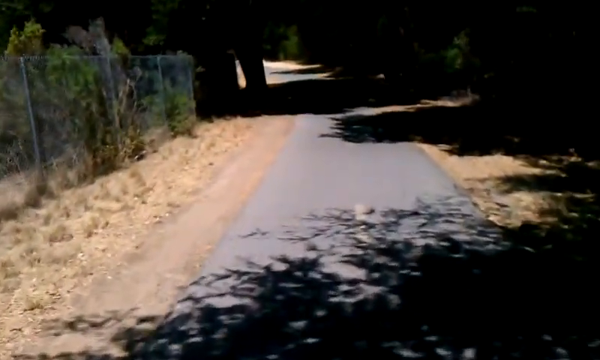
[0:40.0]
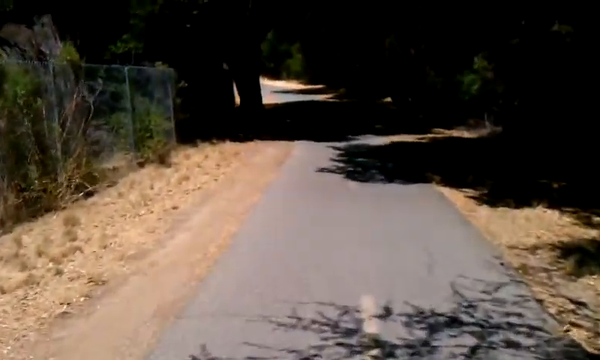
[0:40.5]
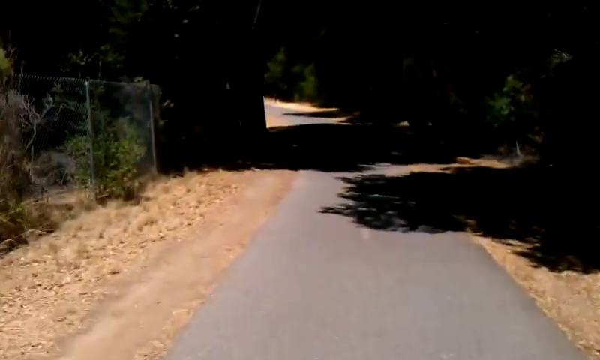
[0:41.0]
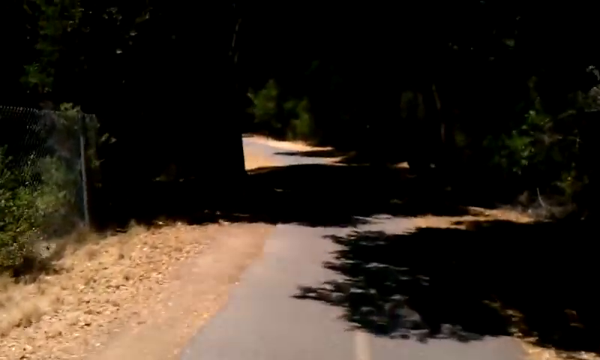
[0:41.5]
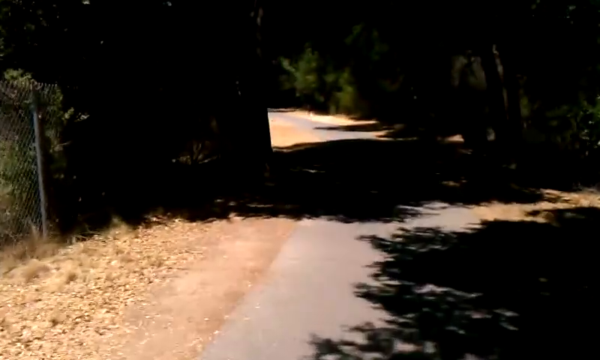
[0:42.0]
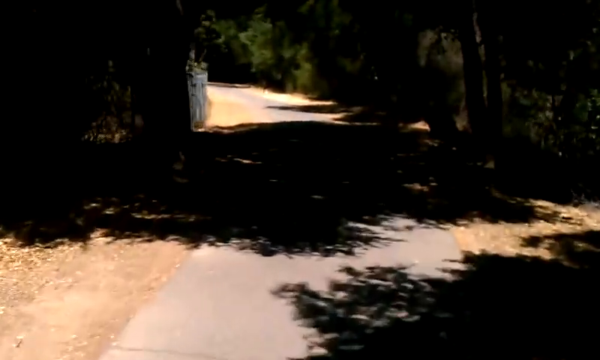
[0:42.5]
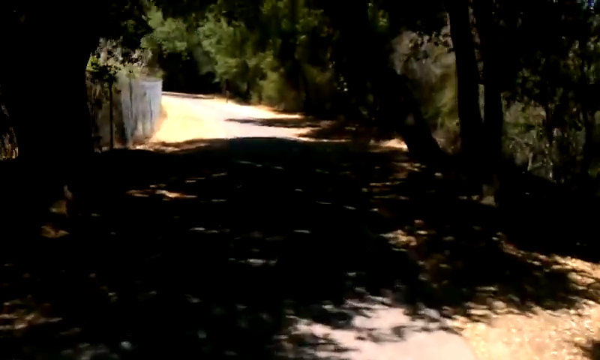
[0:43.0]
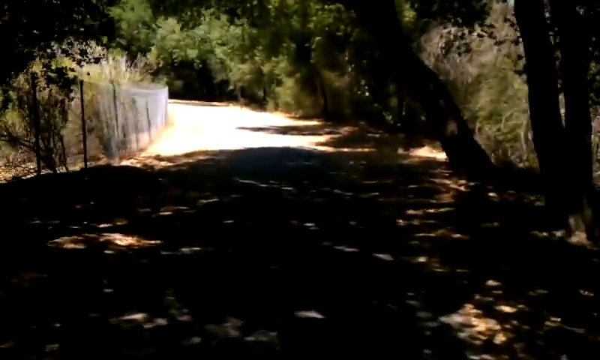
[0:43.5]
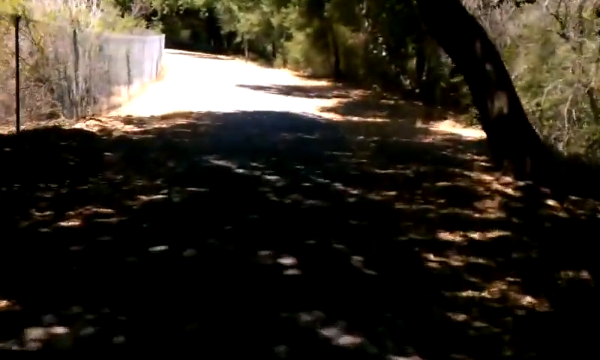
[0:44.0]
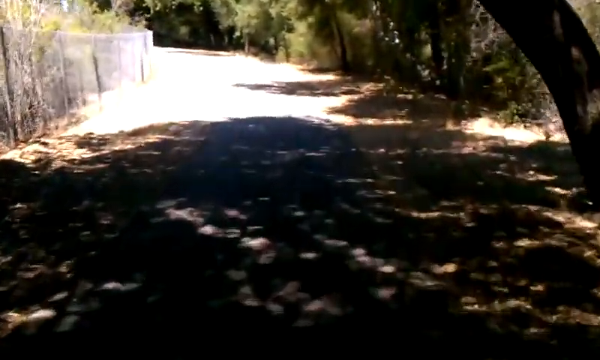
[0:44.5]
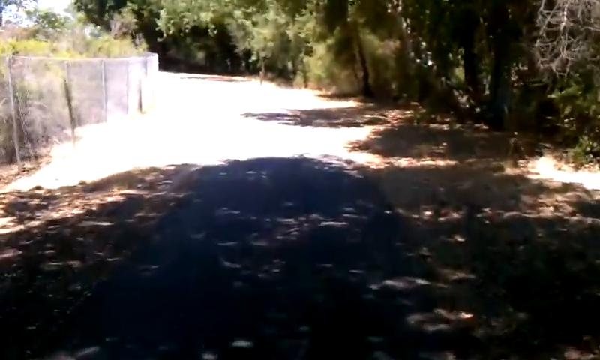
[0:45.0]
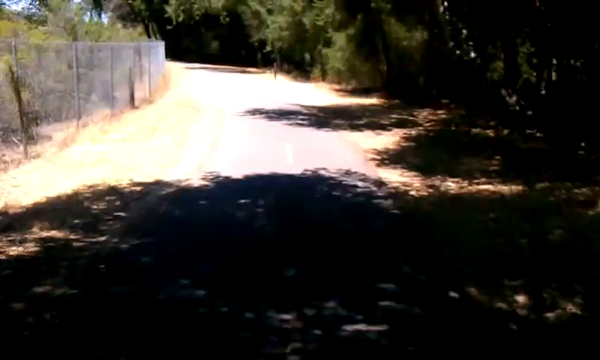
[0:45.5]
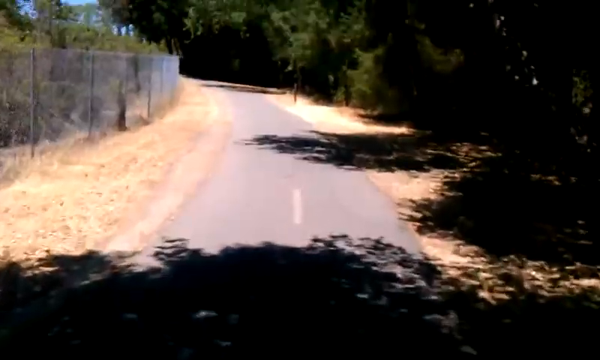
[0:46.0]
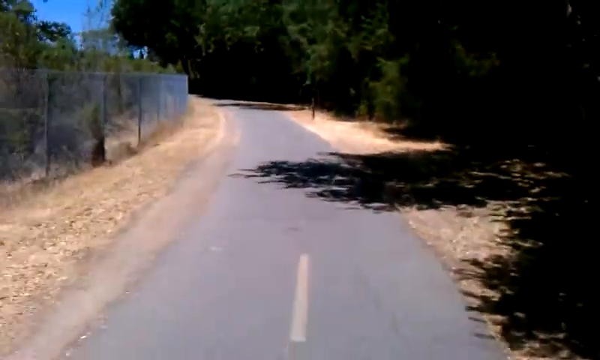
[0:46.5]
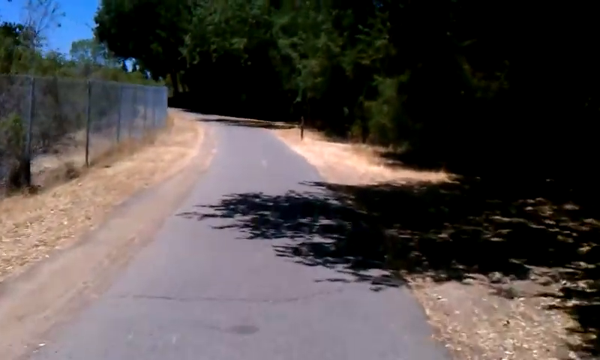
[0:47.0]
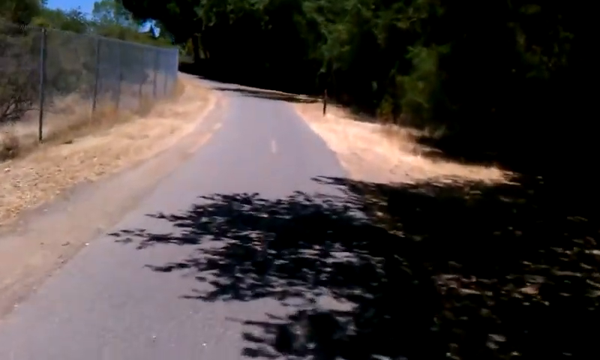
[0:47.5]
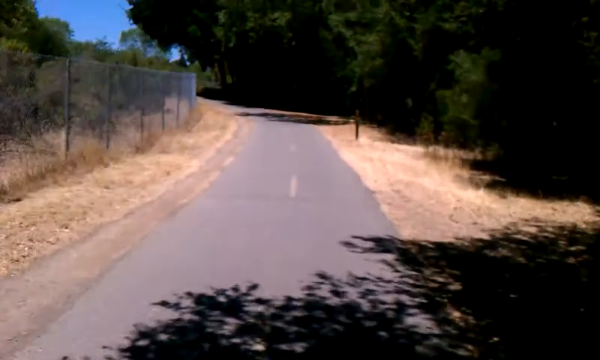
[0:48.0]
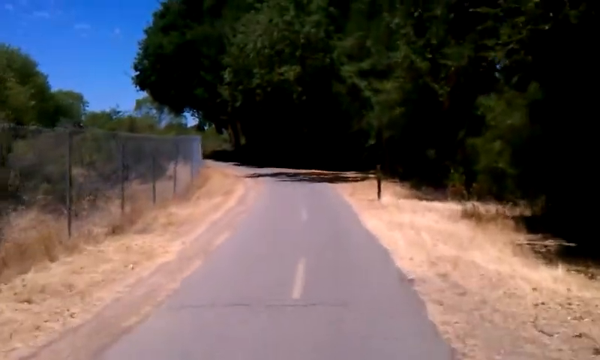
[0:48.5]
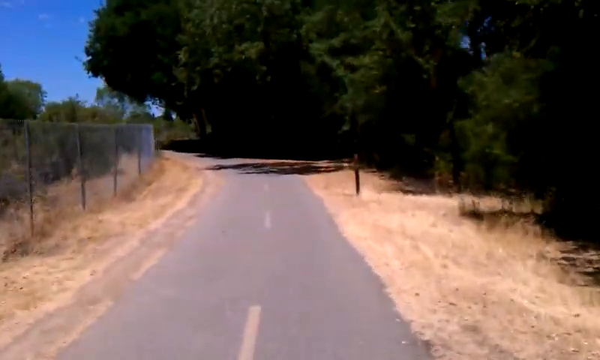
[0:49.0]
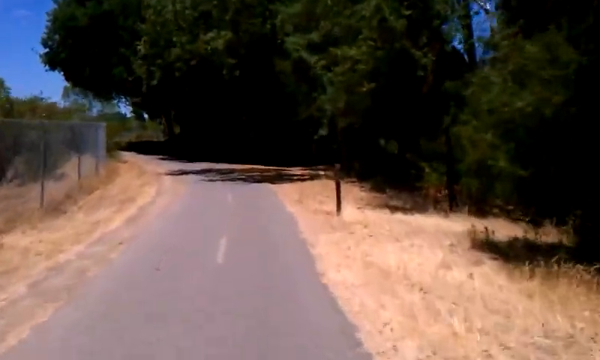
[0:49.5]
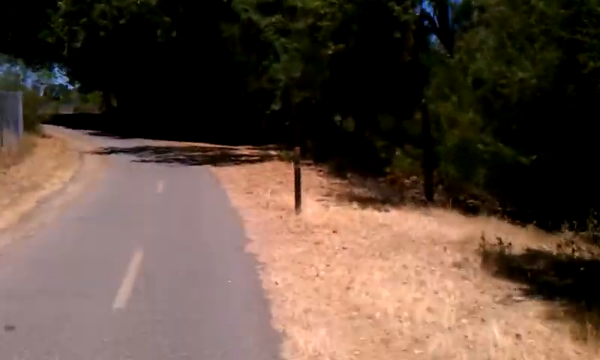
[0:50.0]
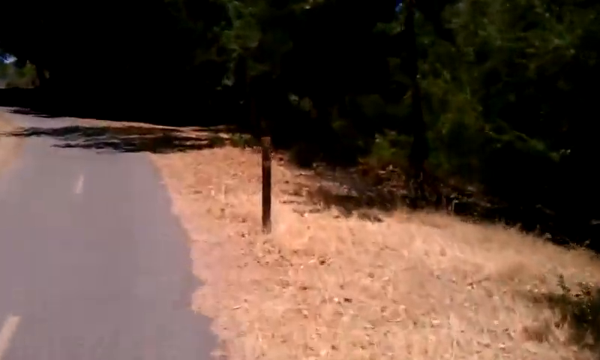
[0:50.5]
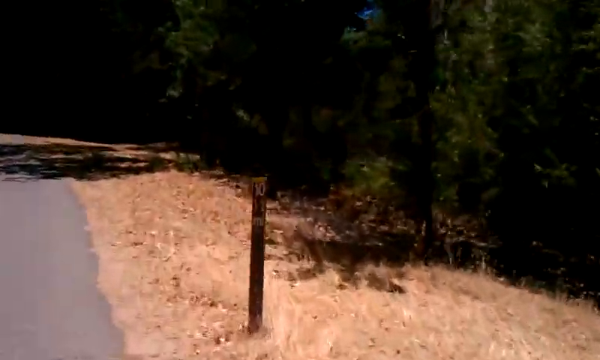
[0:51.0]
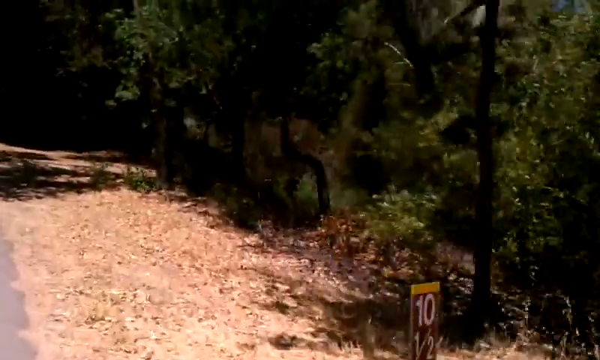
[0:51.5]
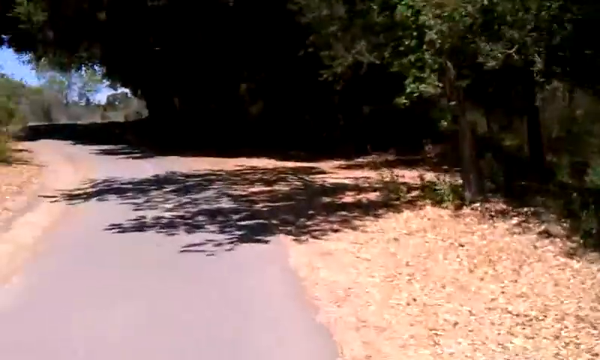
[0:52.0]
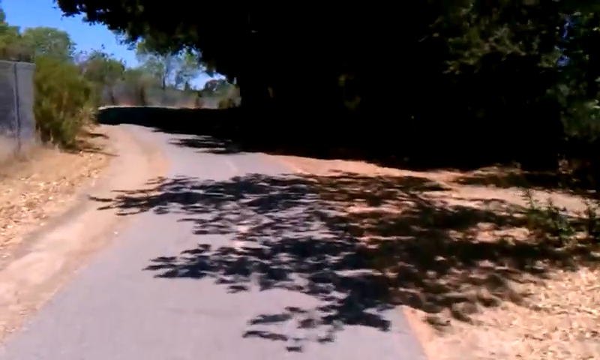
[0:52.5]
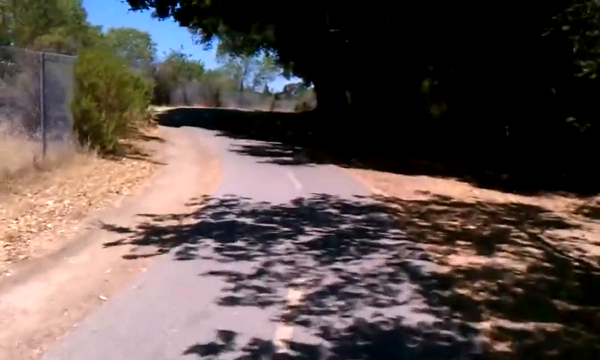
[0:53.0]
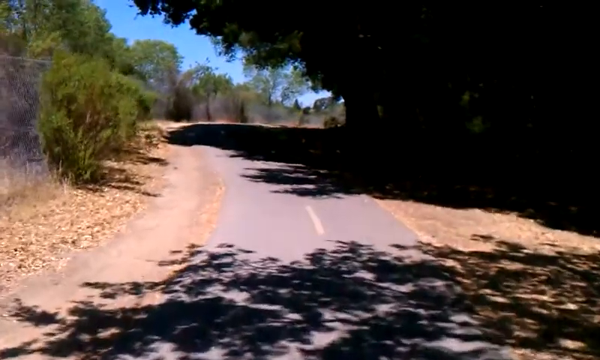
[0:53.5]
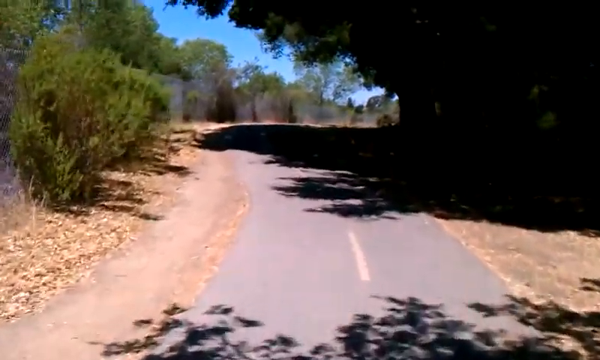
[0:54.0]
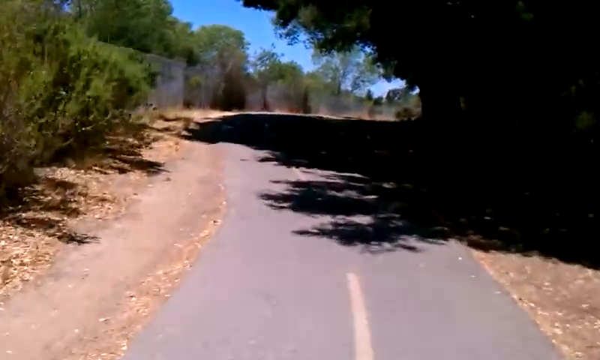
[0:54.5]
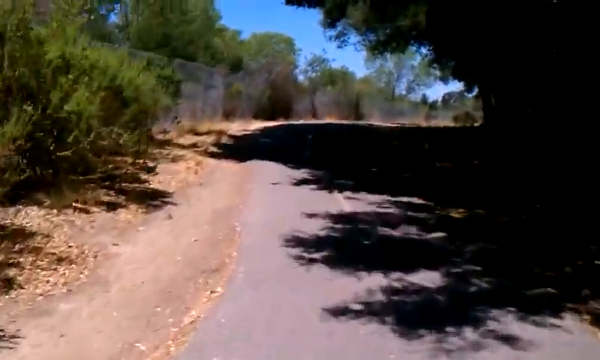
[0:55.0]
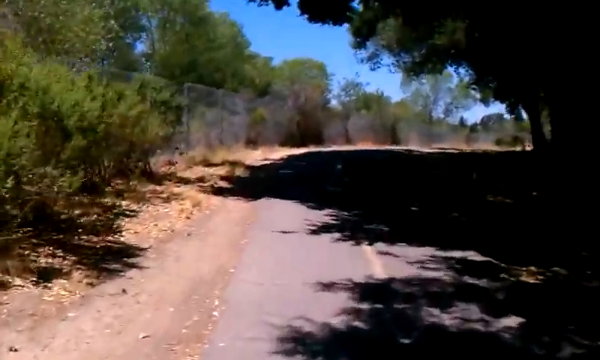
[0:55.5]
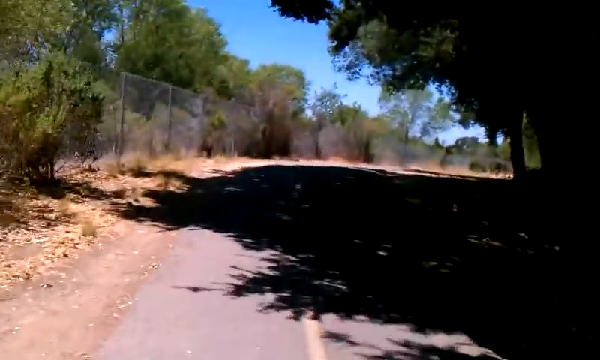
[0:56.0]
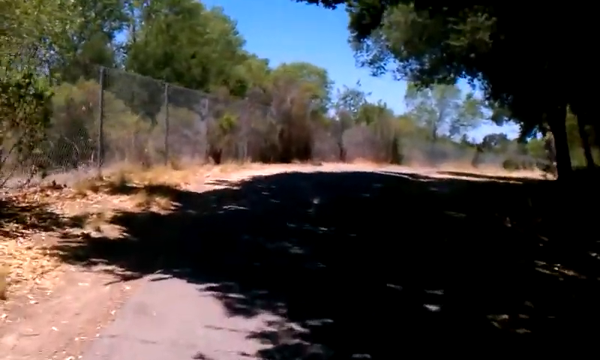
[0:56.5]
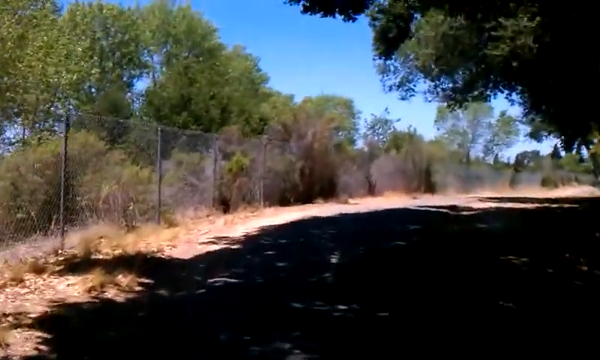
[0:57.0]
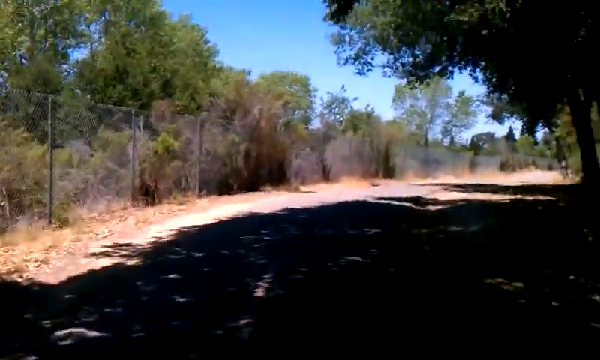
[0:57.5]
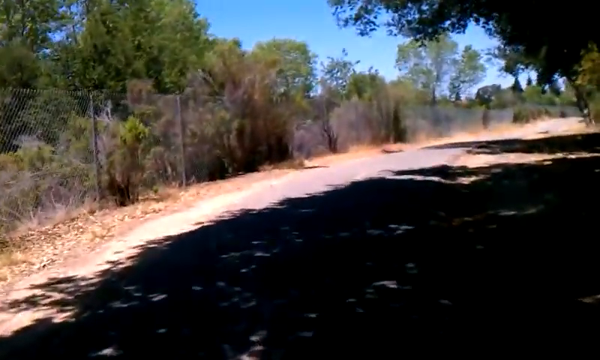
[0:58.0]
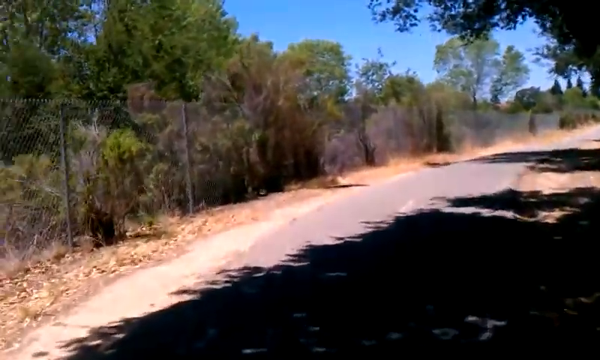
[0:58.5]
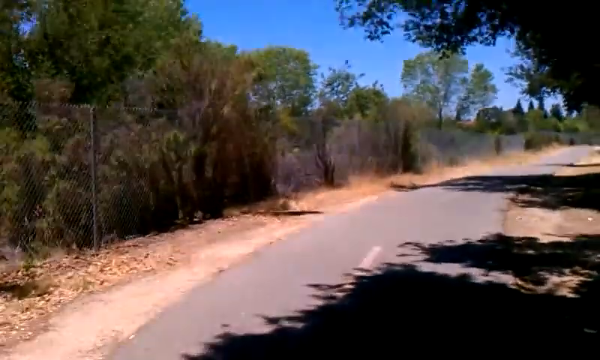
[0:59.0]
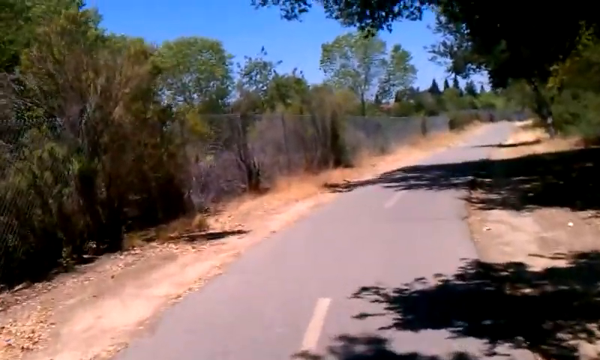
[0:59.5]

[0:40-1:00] A cyclist goes down a grey road with white lines running down the middle. Sunlight beams down, creating light and the shadows of the trees up ahead. On either side of the road is light brown, cut-down weedy vegetation, and a greyish chain-link fence is on the left side. The cyclist passes through the path underneath the trees and their shade, then continues past more light brown sections on either side of the small road. More trees are on the left, and the clear blue sky is off in the distance. A stick is on the right side of the road; it apparently says "10ml" in white, and the stick or metal piece in the ground looks dark brown.